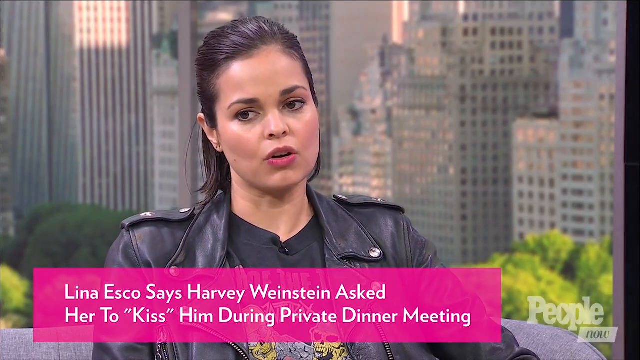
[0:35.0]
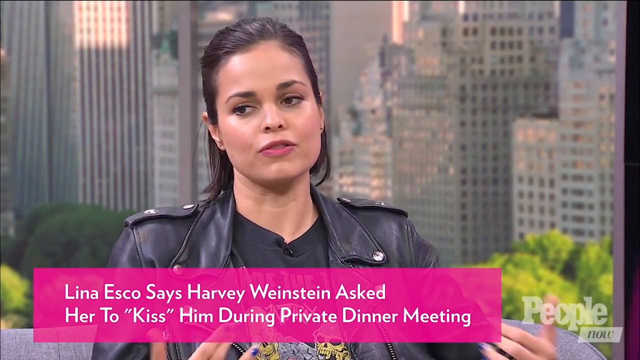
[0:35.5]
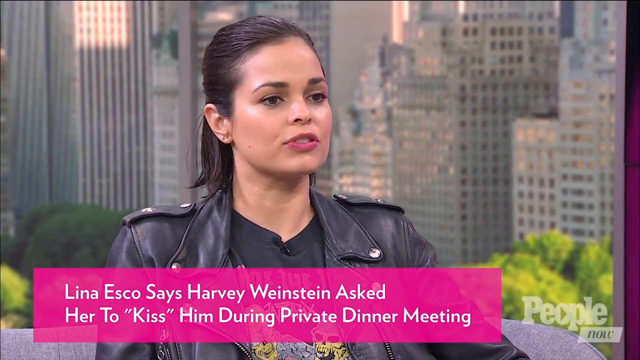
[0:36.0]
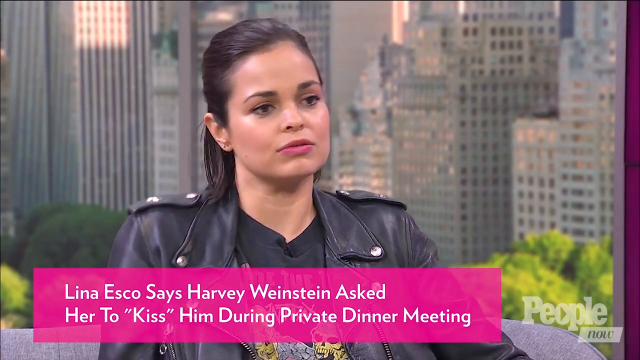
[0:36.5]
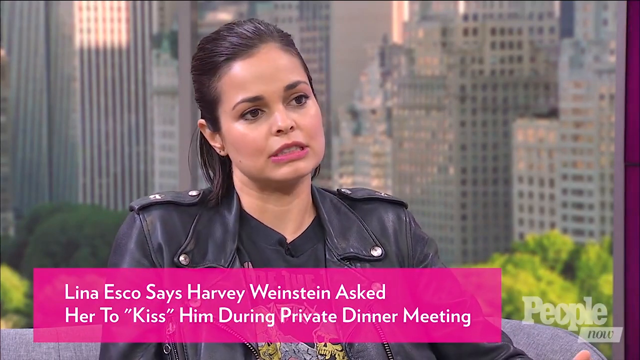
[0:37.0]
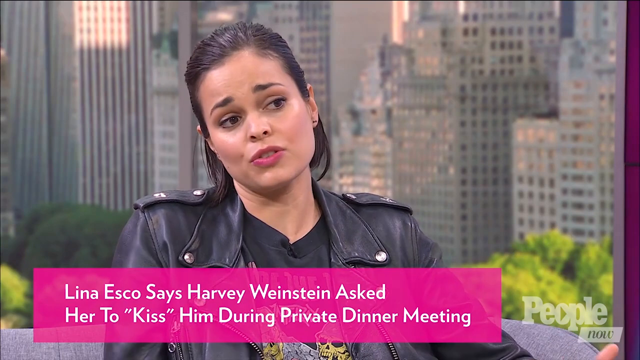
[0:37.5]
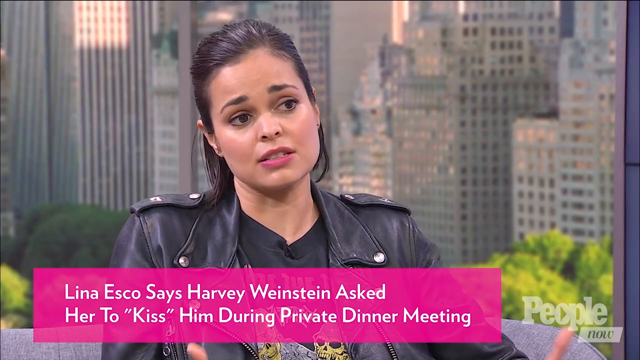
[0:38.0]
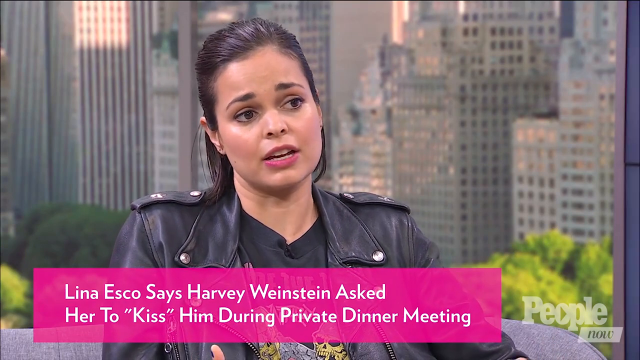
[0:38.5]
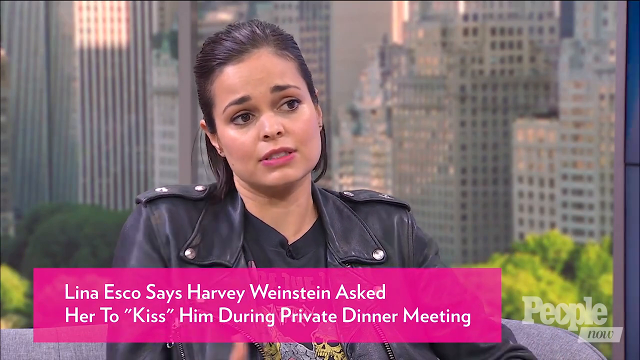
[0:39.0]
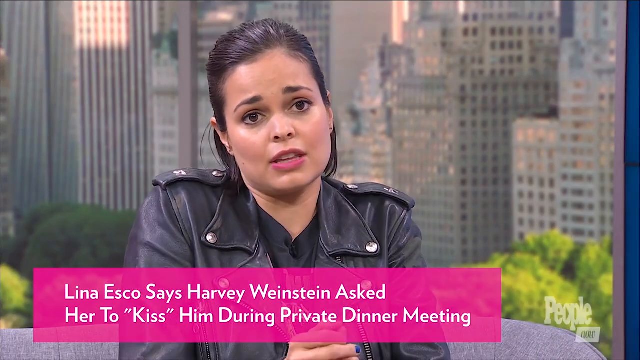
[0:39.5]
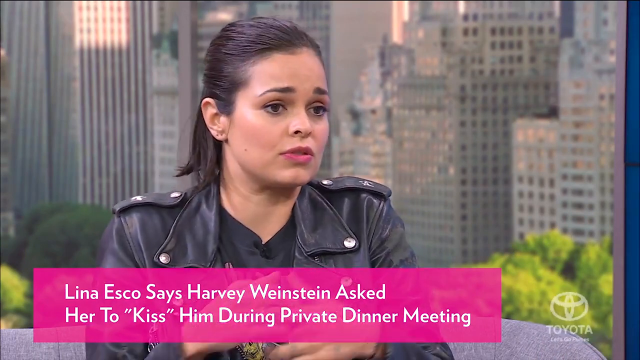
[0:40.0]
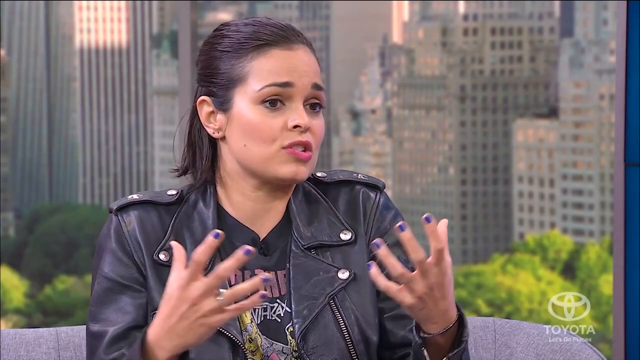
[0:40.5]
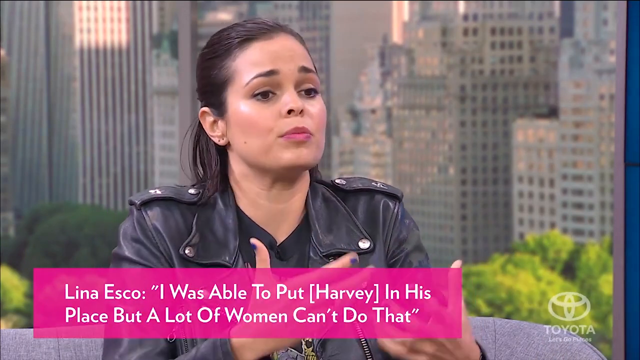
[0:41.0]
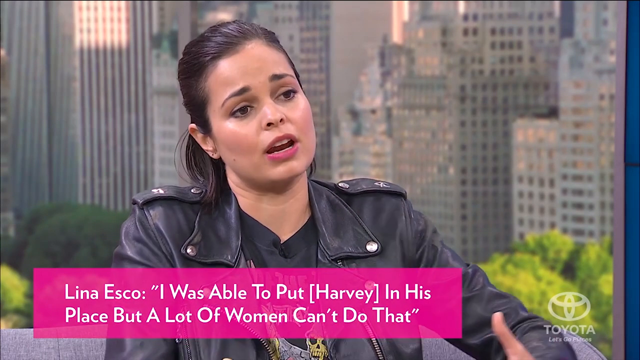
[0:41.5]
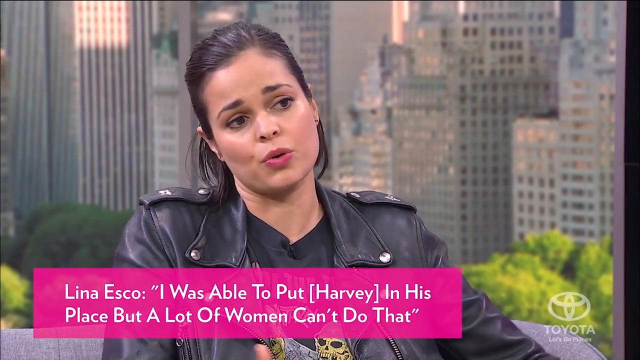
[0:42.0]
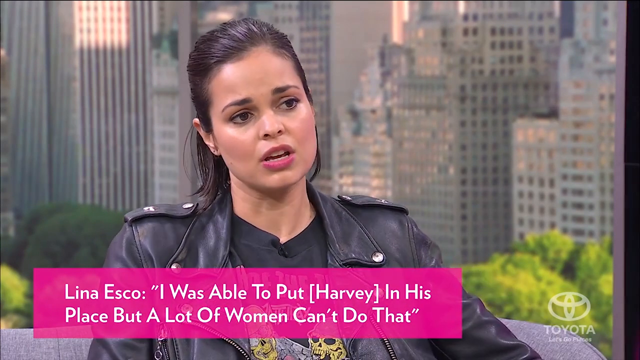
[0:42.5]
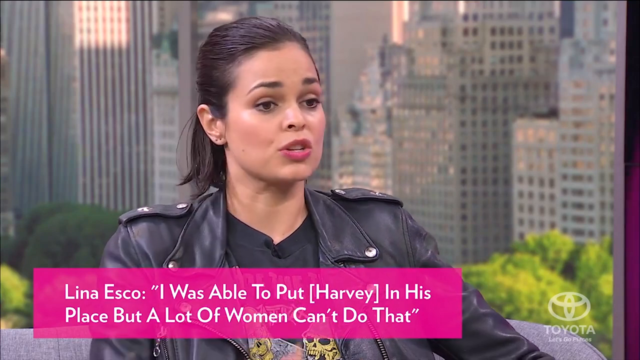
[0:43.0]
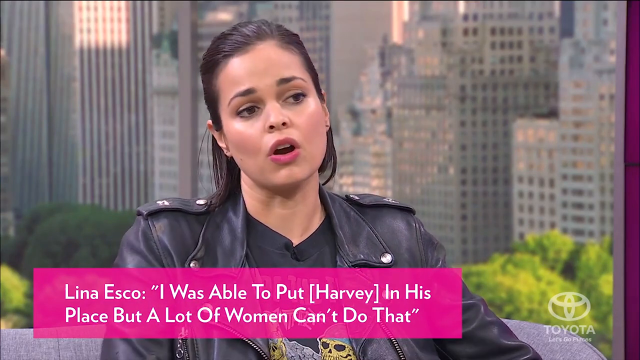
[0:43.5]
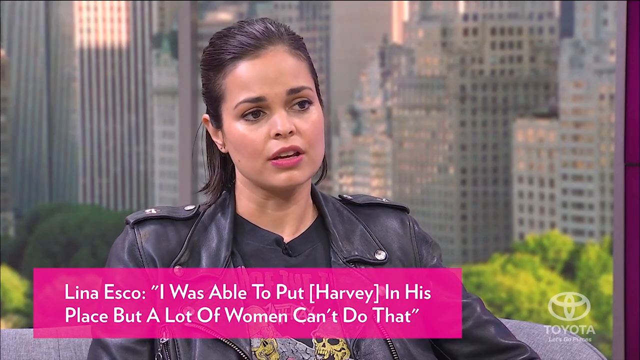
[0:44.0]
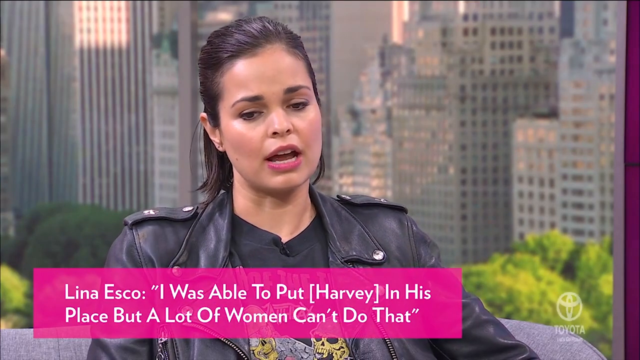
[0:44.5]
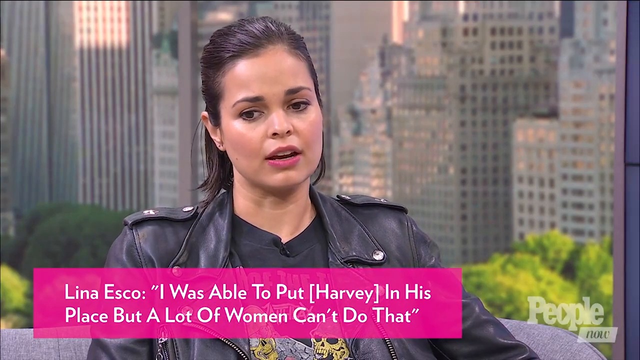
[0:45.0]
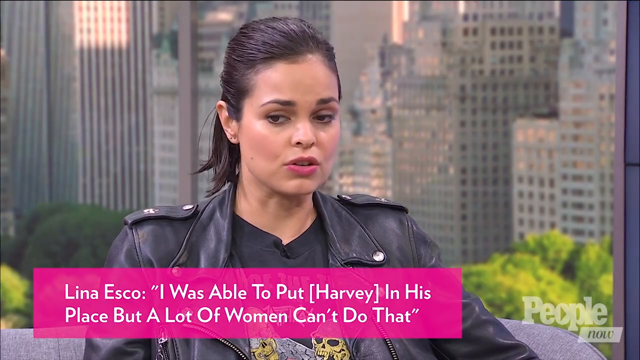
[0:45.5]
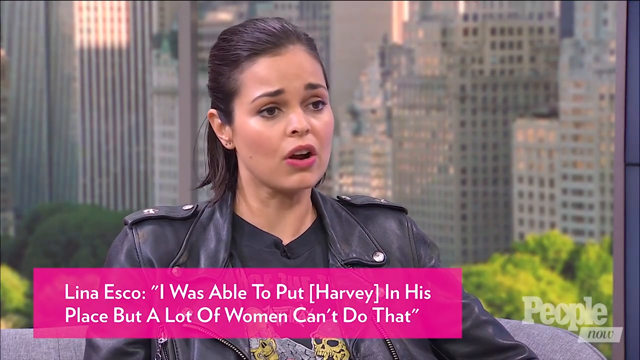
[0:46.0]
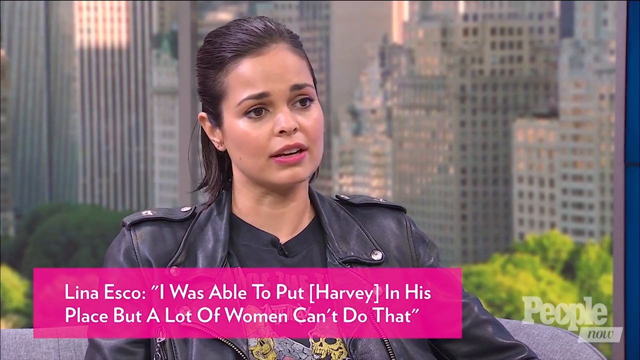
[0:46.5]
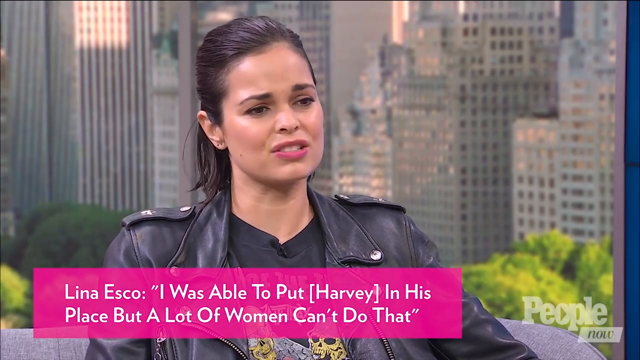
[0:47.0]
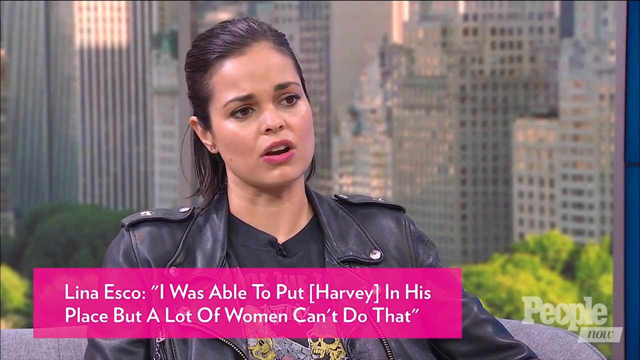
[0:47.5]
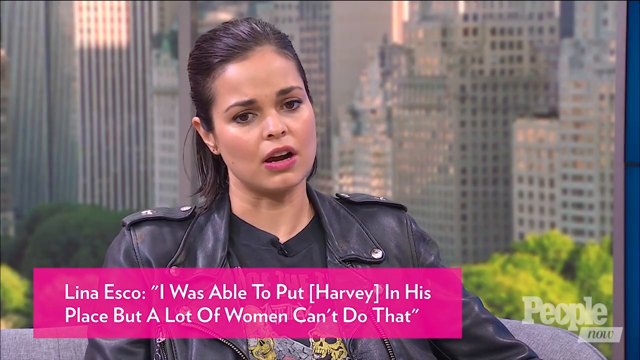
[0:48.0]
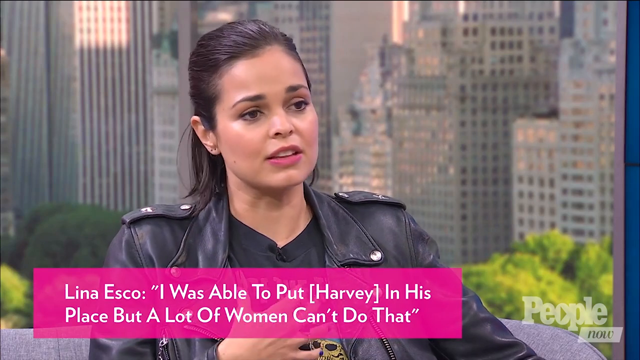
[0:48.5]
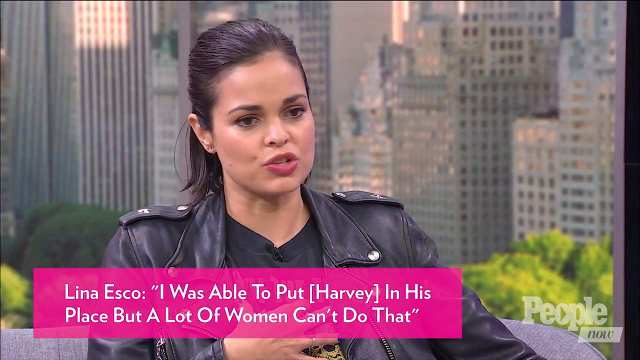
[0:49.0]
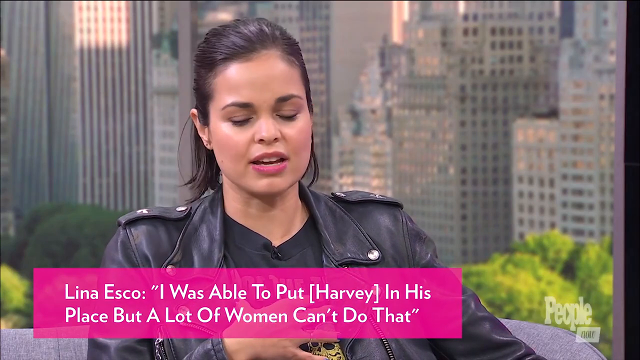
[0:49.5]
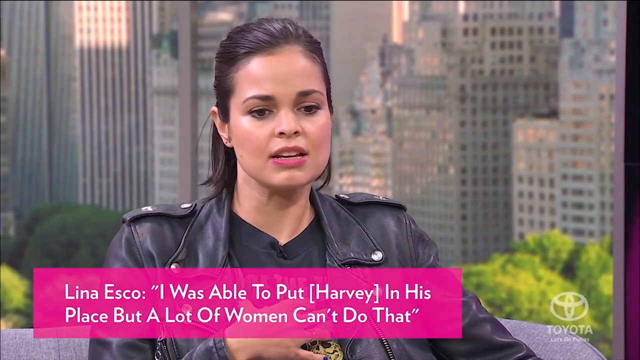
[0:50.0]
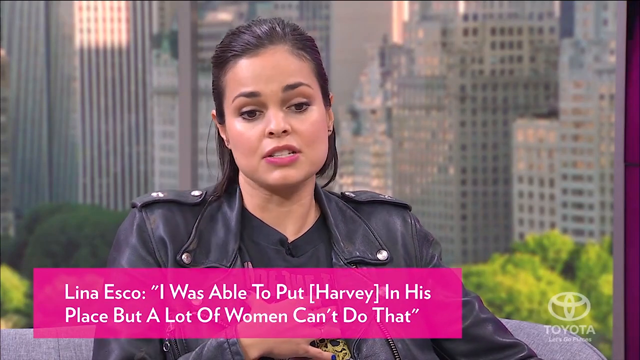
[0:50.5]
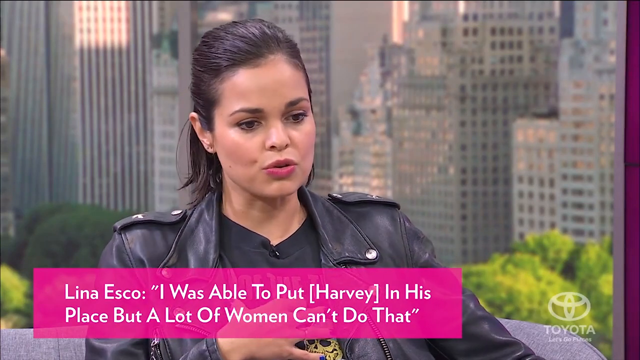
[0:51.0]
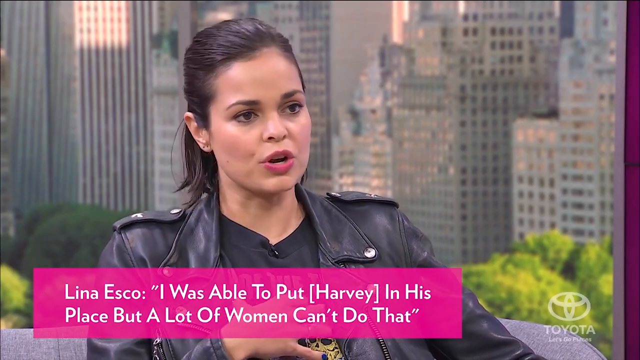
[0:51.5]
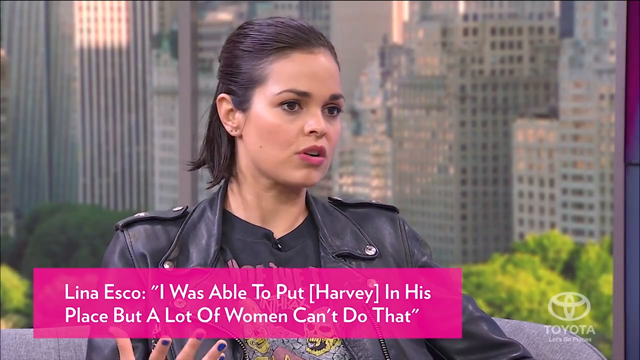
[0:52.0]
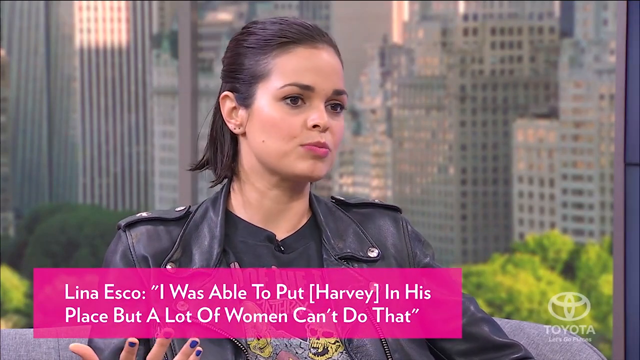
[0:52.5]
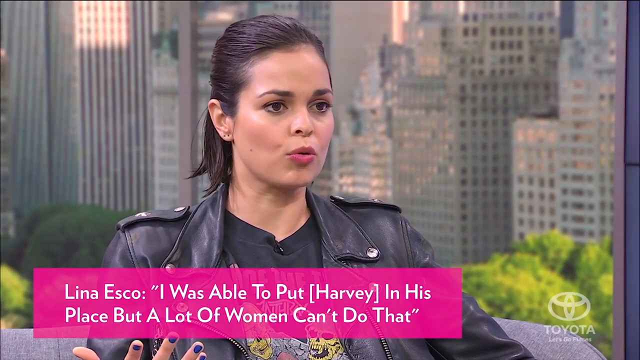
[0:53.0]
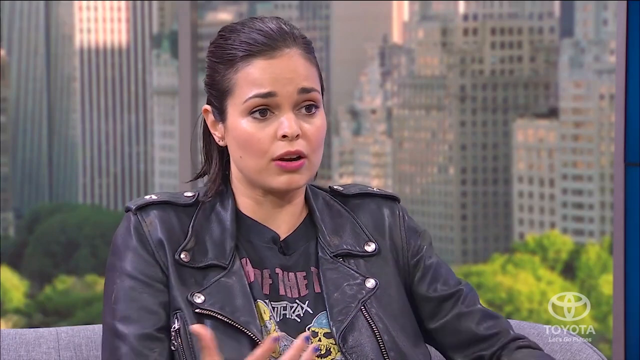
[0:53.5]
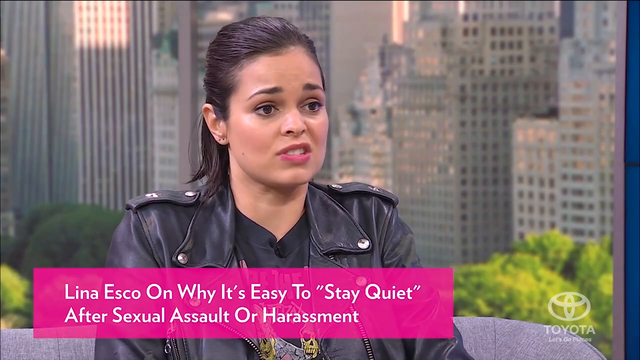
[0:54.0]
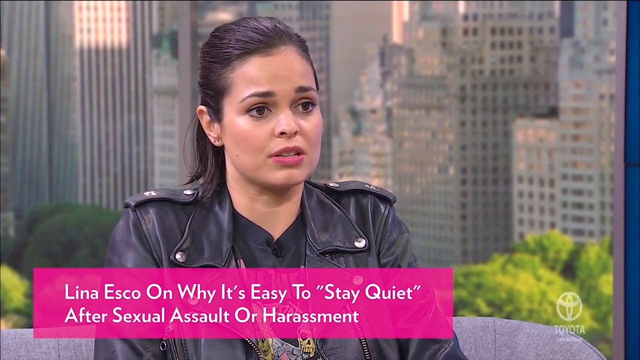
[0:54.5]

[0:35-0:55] The actress is shown talking again, and on-screen text reads "Elena Espo I was able to put Harvey in his place but not a lot of women can do that". She has a very serious look on her face and wears pink lipstick. She seems to have short black hair and has piercings, and she is very expressive. The set, apparently a show studio, has tall buildings in the background and some green flowers.